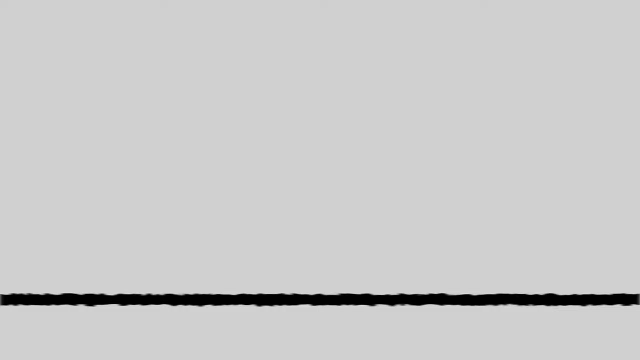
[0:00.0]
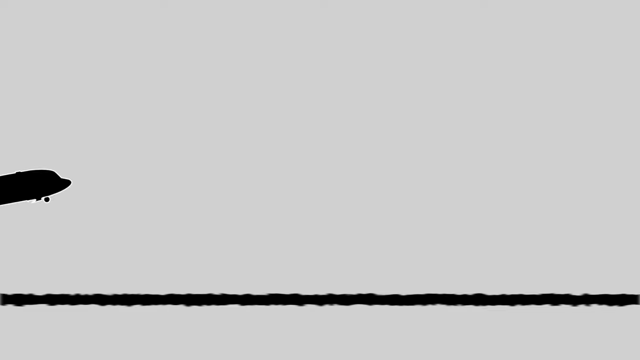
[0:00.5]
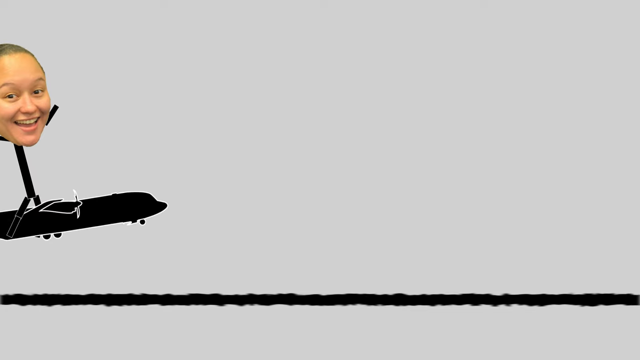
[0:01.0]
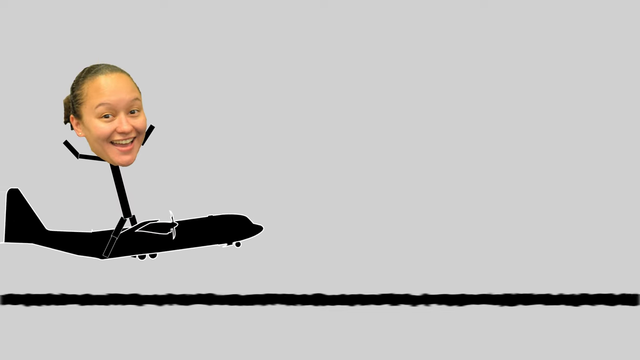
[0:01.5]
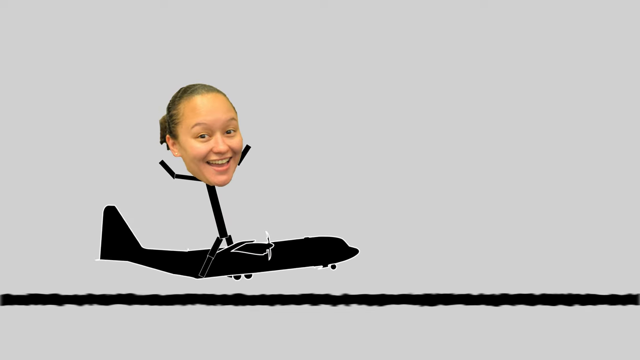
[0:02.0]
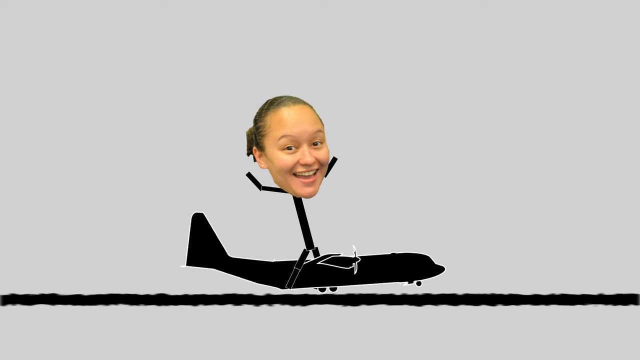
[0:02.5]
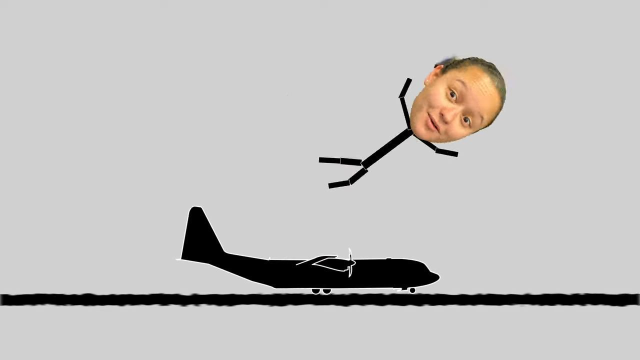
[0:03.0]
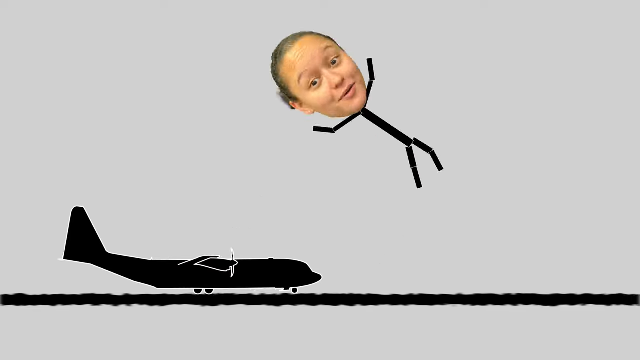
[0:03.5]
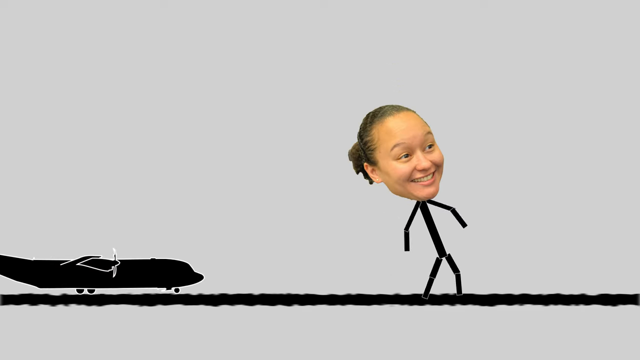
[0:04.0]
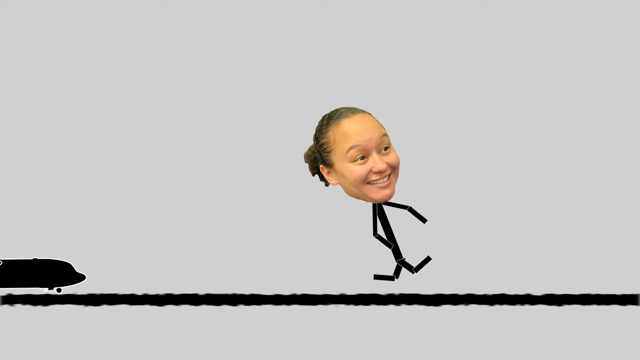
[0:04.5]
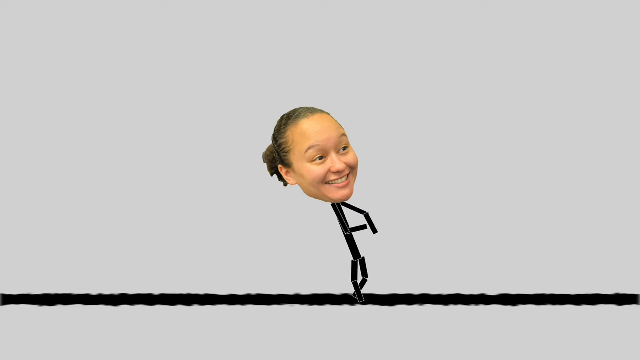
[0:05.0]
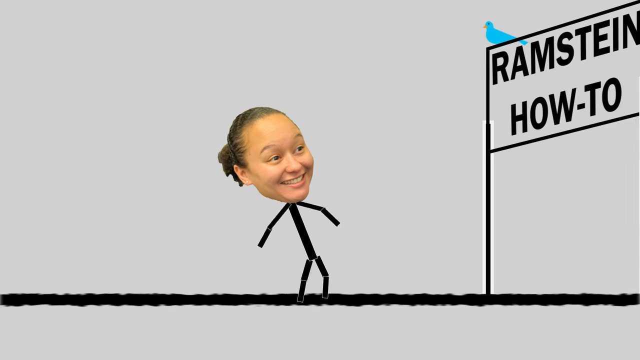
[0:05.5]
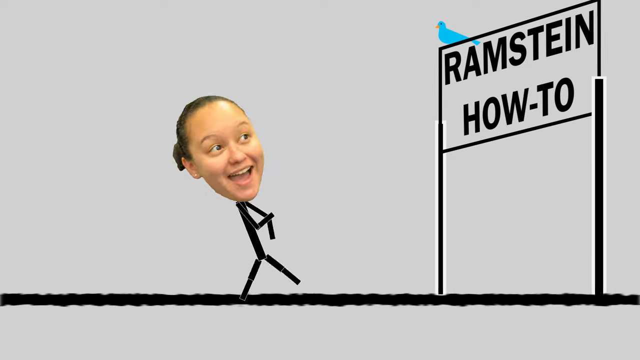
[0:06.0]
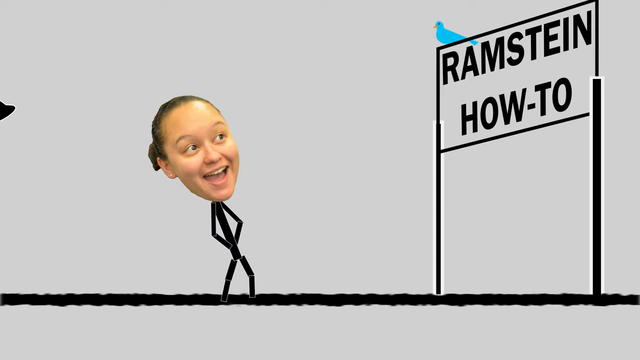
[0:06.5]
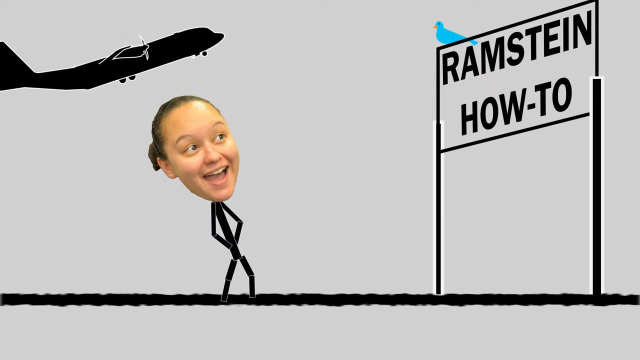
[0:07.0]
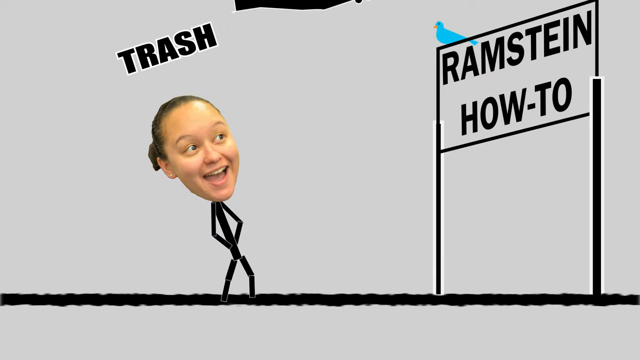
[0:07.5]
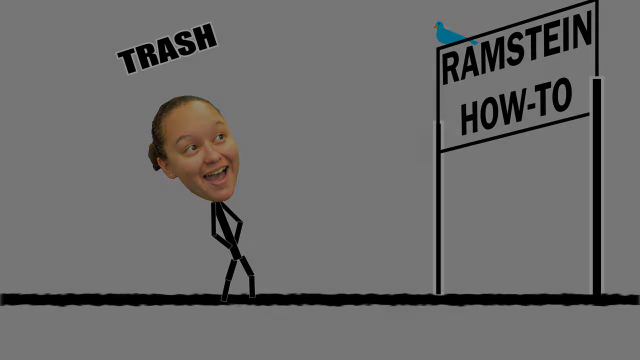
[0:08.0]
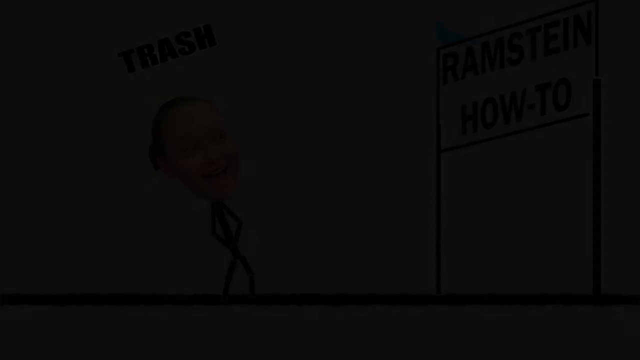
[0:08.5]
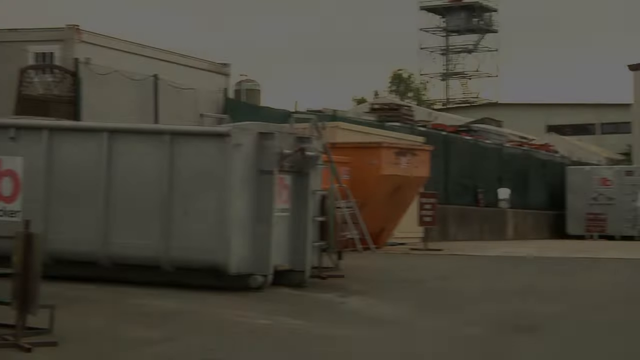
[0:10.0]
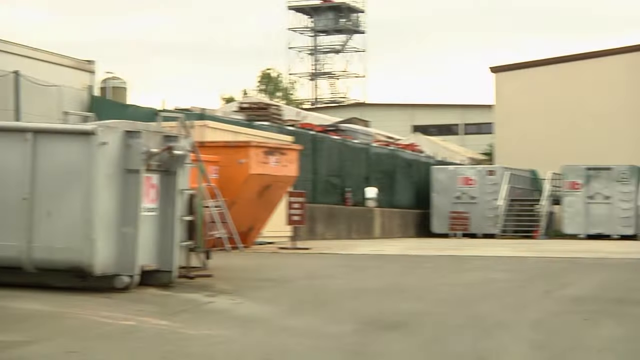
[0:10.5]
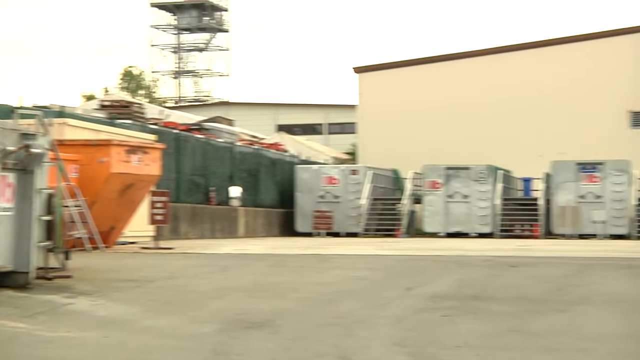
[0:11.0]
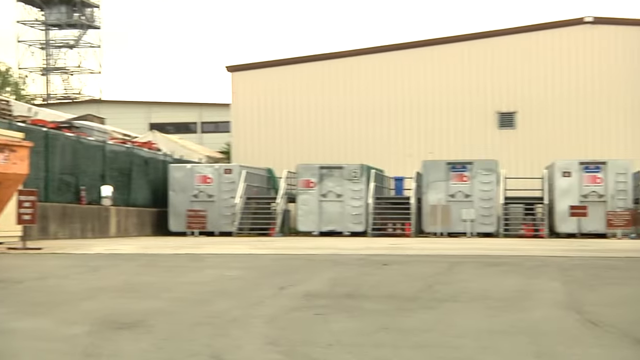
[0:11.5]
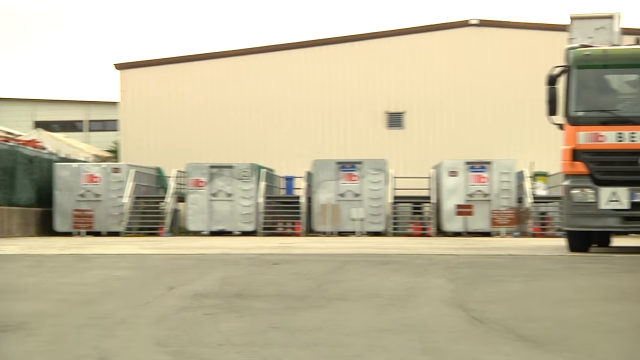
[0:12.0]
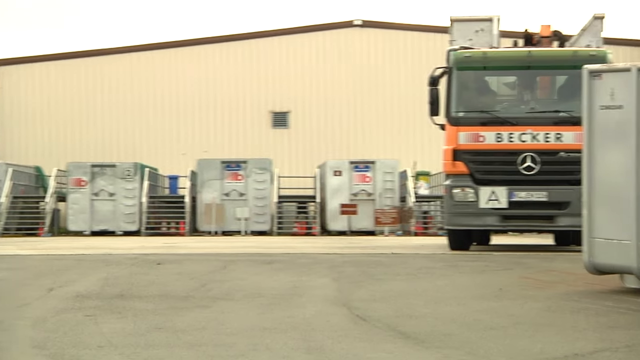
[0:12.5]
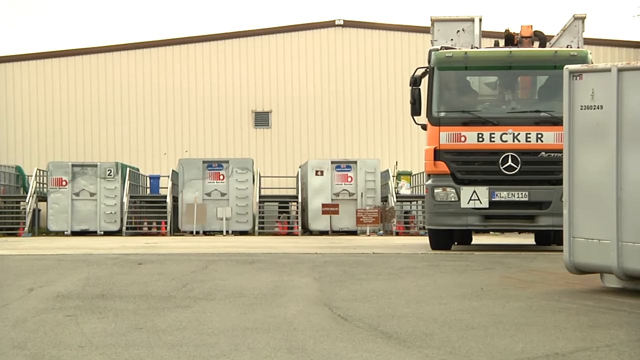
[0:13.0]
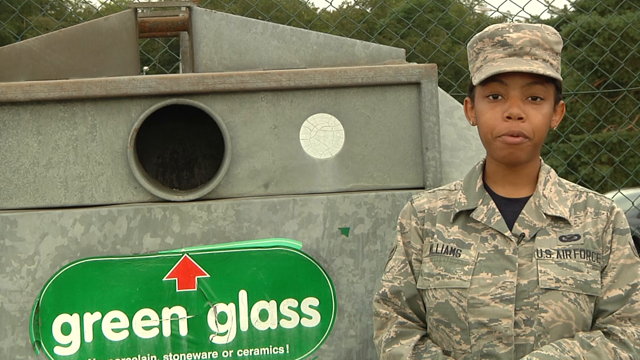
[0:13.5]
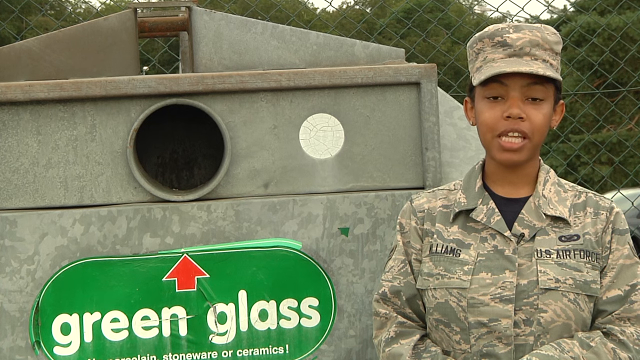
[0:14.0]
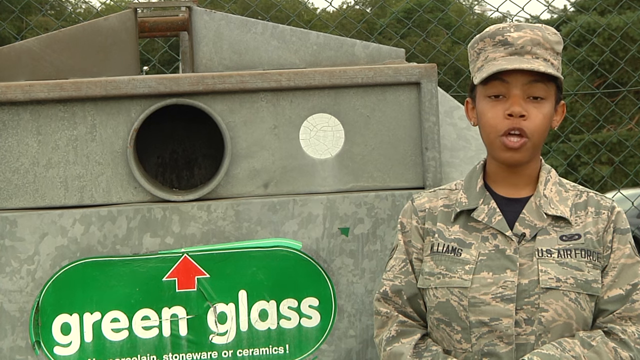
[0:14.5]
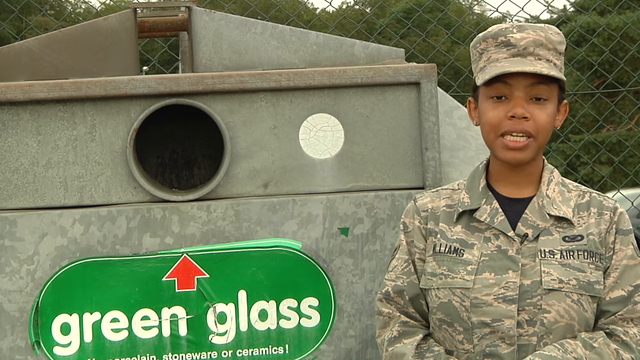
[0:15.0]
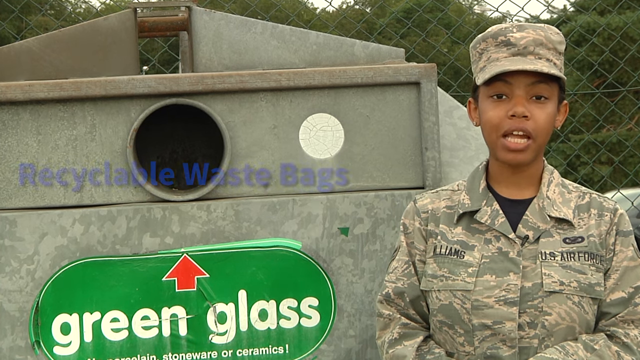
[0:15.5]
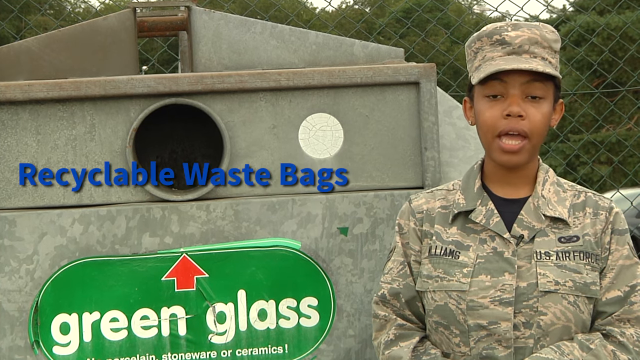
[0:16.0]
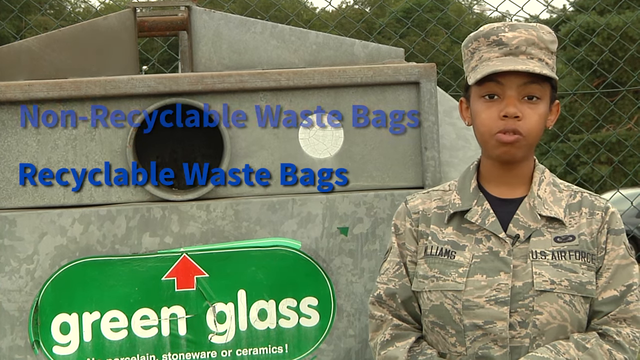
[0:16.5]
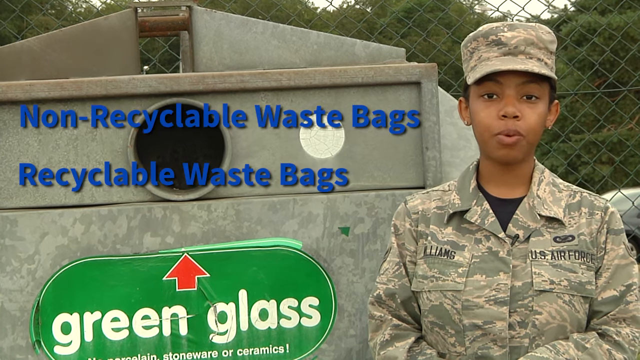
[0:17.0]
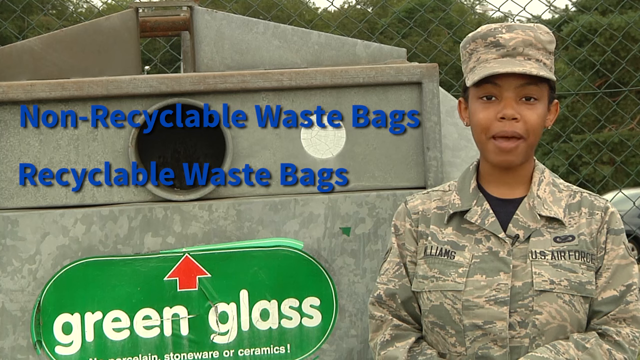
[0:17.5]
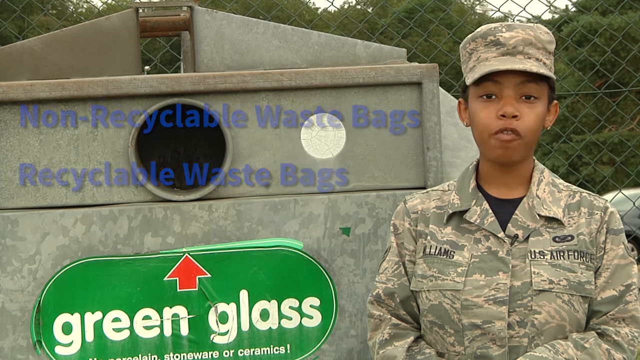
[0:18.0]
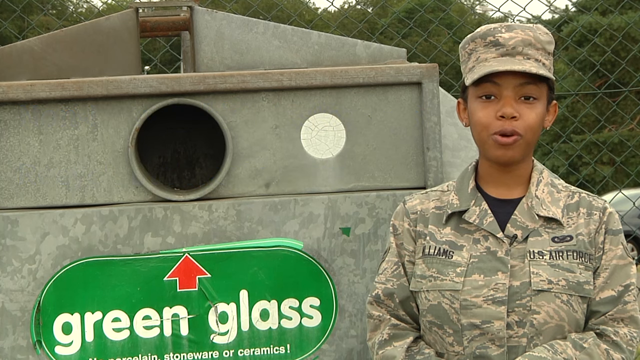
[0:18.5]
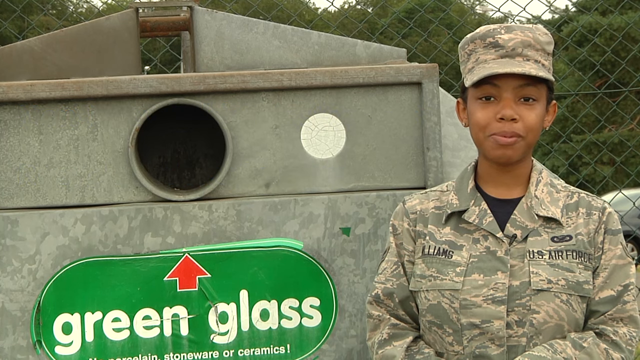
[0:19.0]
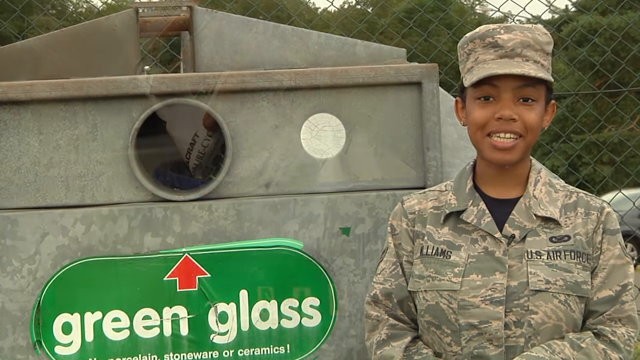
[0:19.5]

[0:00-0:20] A cartoon-like face of a person with a body appears, with another person on top. The face then reaches a sign that says "ramstein auto". Next comes what looks like a construction place, and beside it an Air Force lady is talking. As she talks, there is a sign or a piece of equipment with "green glass" written on it, and text appears reading "non-recyclable waste" and "recyclable waste bags". The Air Force lady keeps talking.